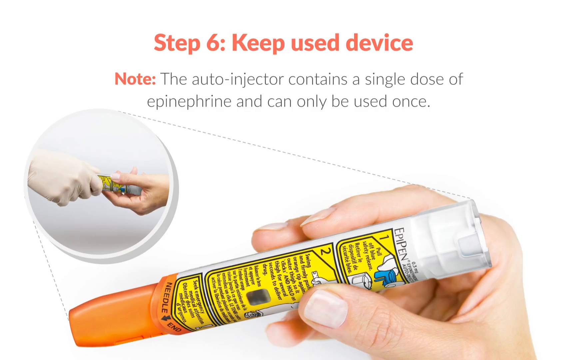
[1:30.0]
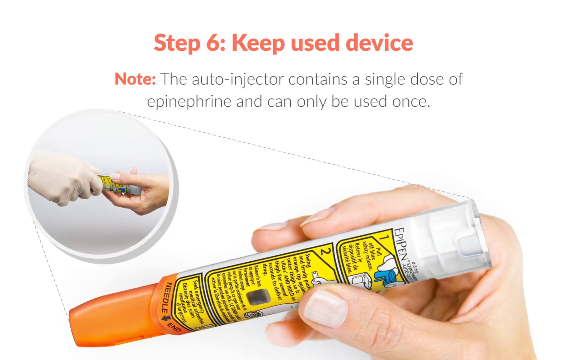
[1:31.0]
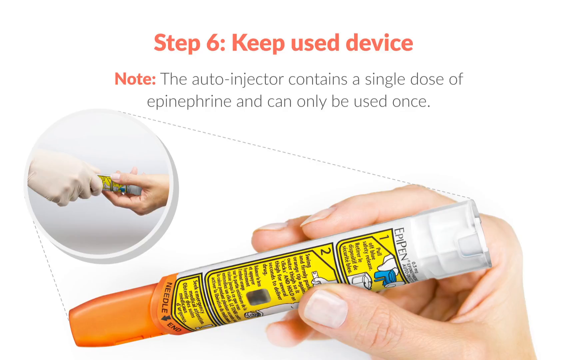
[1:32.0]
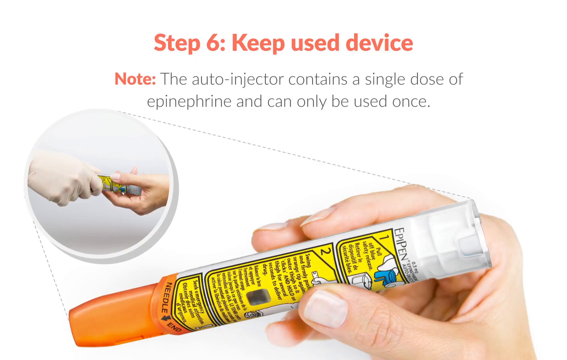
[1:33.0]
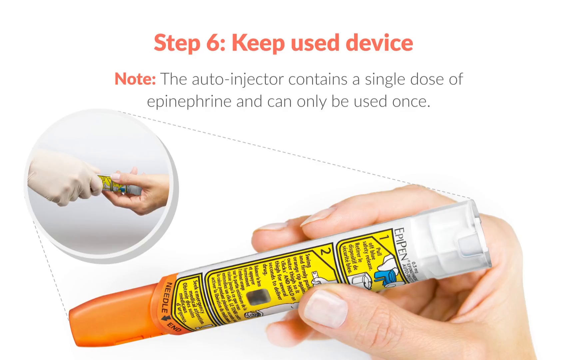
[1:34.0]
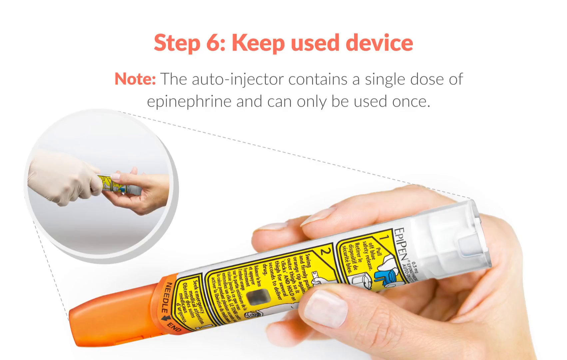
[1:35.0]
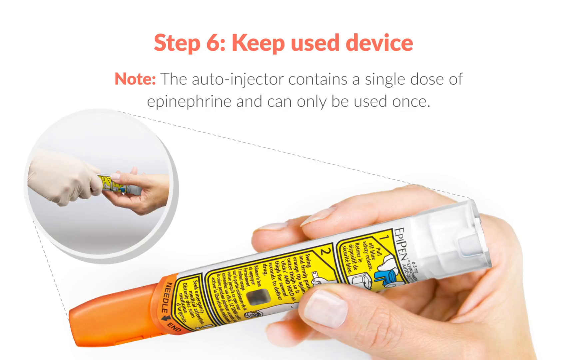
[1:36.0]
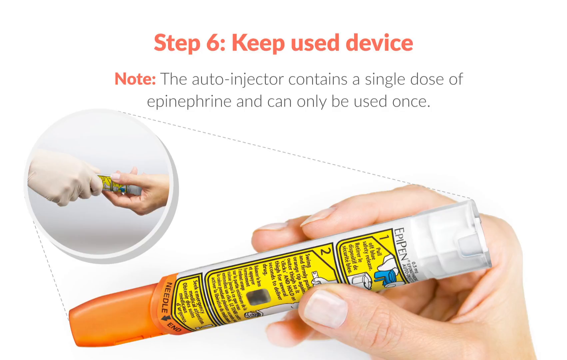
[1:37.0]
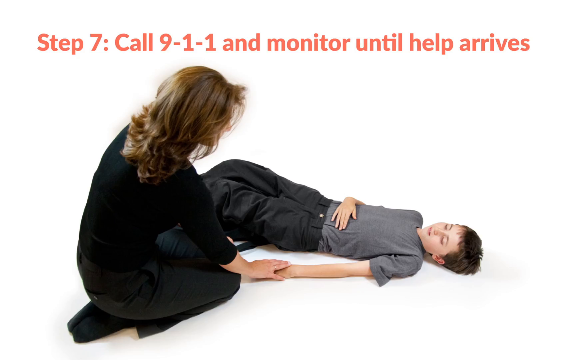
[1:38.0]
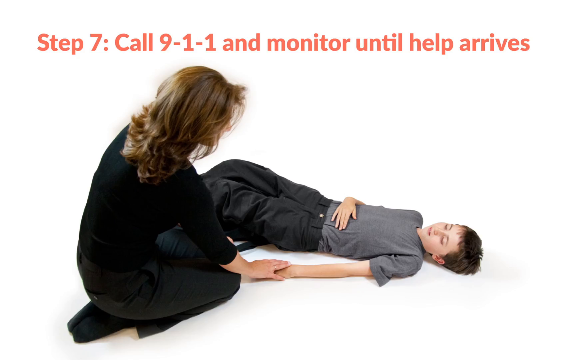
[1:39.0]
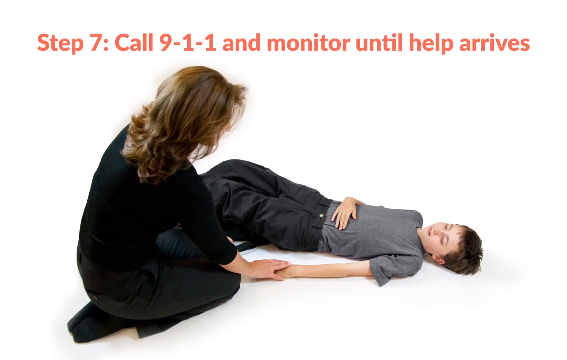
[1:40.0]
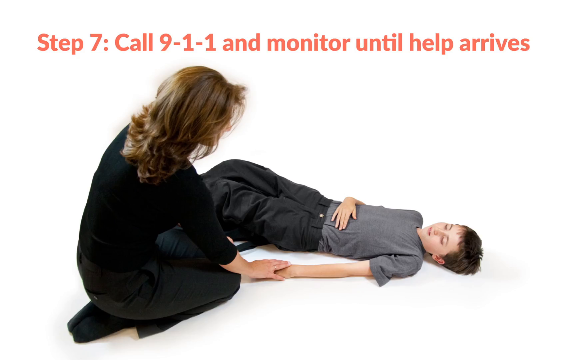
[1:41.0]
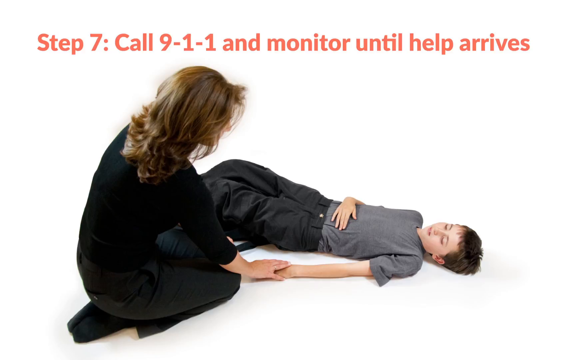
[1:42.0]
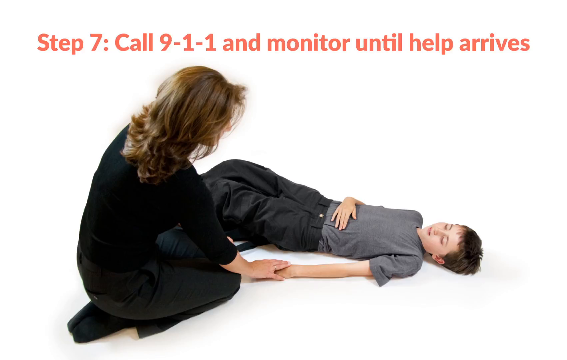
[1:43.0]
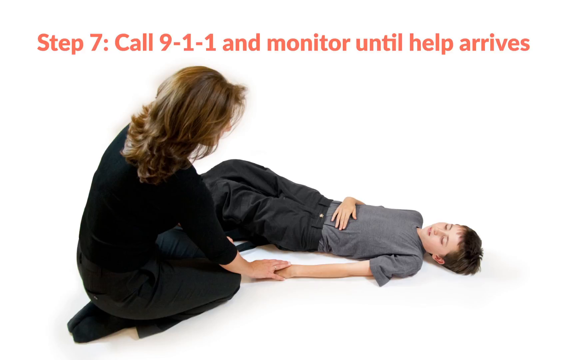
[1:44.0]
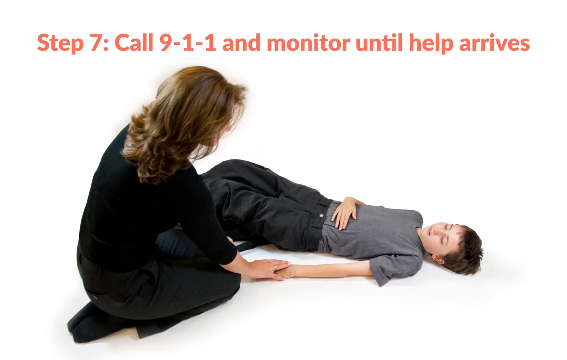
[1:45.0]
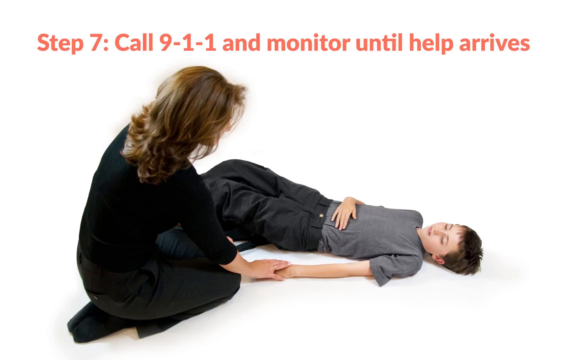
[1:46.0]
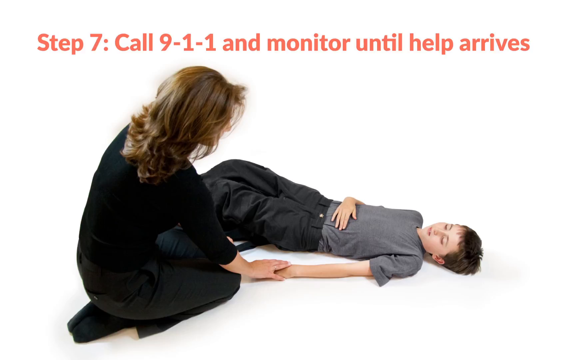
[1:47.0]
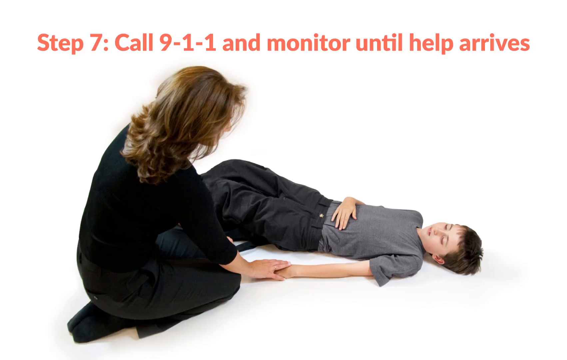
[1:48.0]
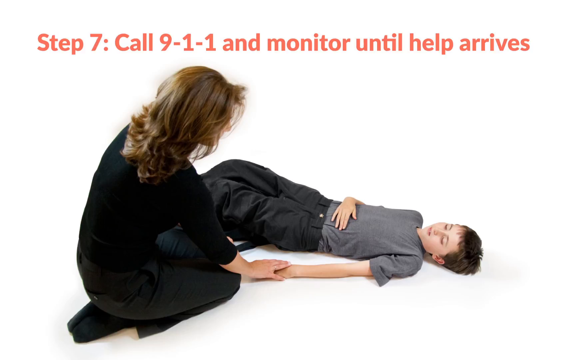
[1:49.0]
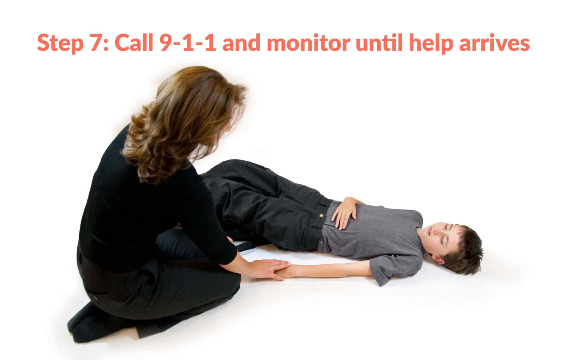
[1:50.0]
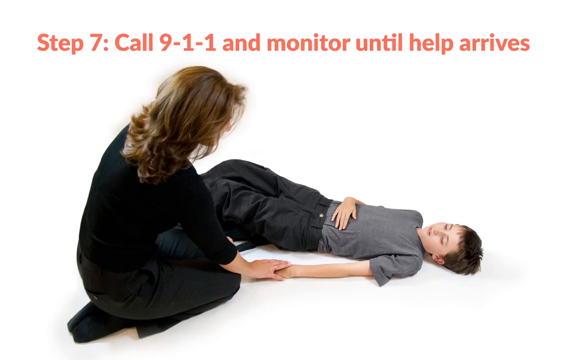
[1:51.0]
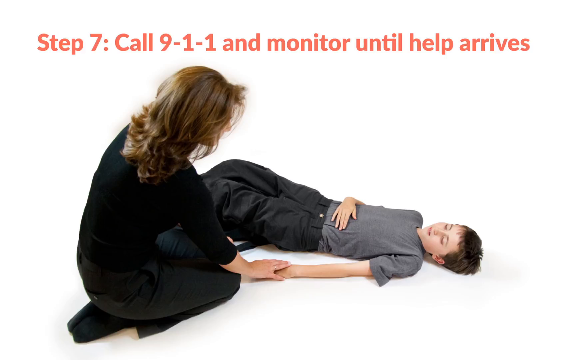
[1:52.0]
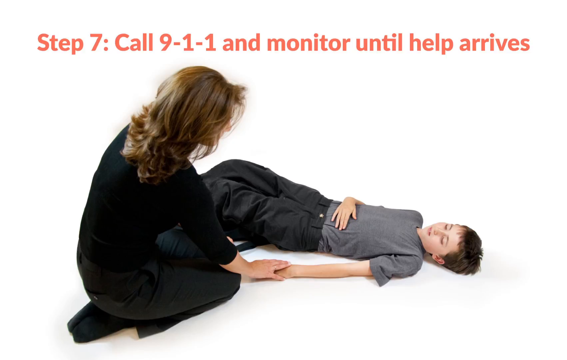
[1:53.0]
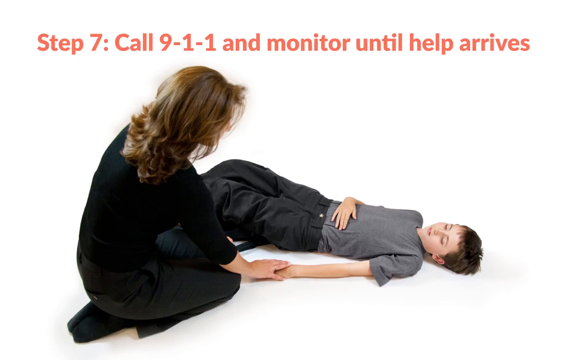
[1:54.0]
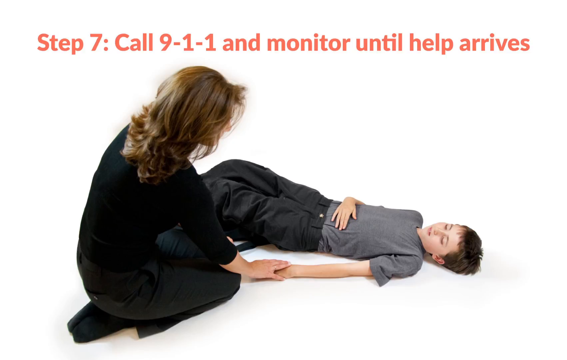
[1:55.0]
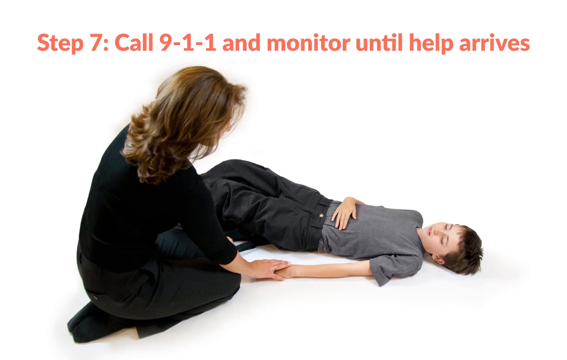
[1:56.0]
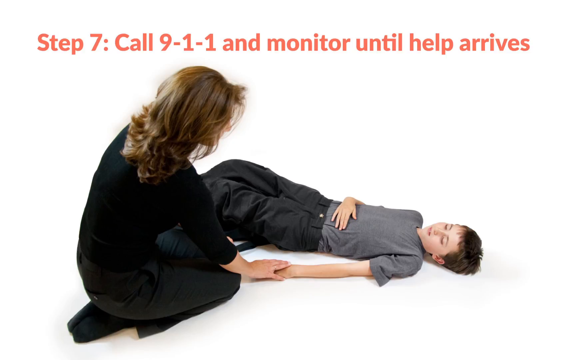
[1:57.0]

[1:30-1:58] Step six, "keep the used device," is on screen, with a note below it about the auto-injector containing only a single dose of epinephrine and being usable only once. The picture shows the EpiPen held in a right hand between the first two fingers and thumb, then zooms in to show a gloved right hand taking the injector from the user, possibly a paramedic or a doctor. The seventh and final step reads "call 911 and monitor until help arrives." Its picture shows both individuals involved. The person who was injected has moved away from the chair and is lying on their back on the floor, legs slightly elevated, right hand placed on their stomach and left arm on the floor; this person looks to be a small male child. An older adult, apparently a woman judging by her long hair, kneels above the child with her back to the camera so her face cannot be seen, using her right hand to hold the child's hand on the floor and looking at the child.